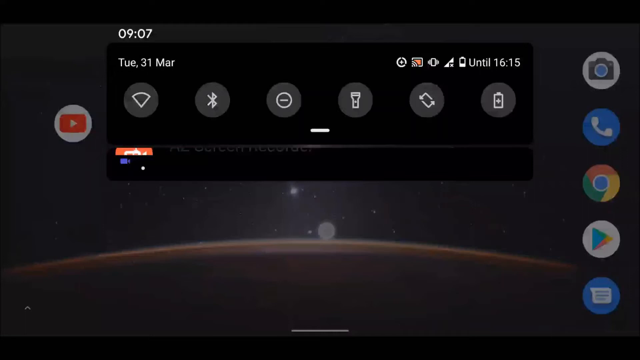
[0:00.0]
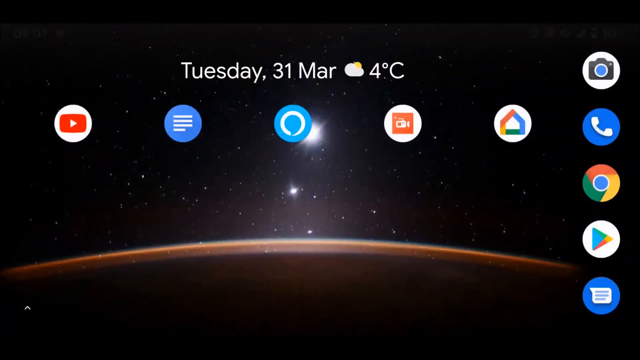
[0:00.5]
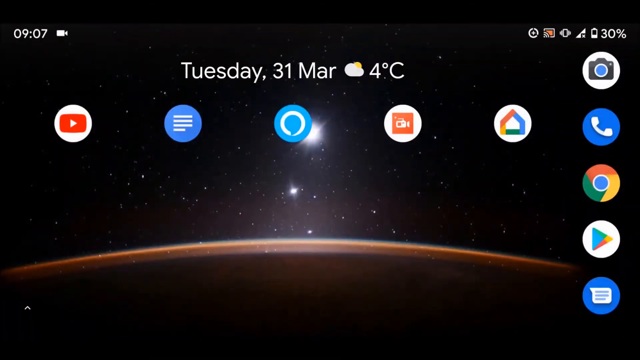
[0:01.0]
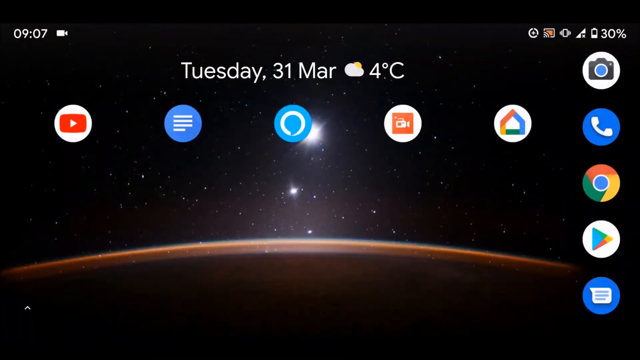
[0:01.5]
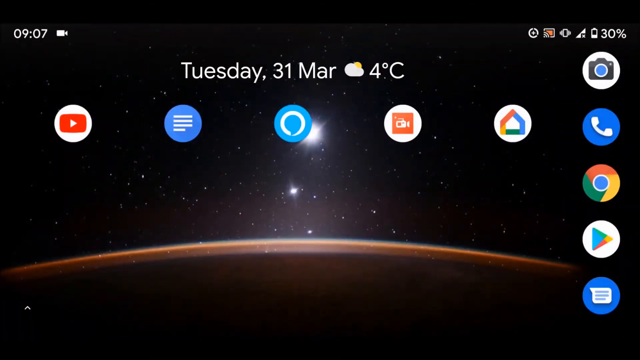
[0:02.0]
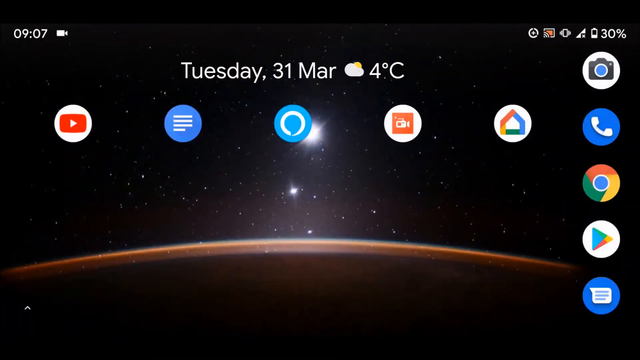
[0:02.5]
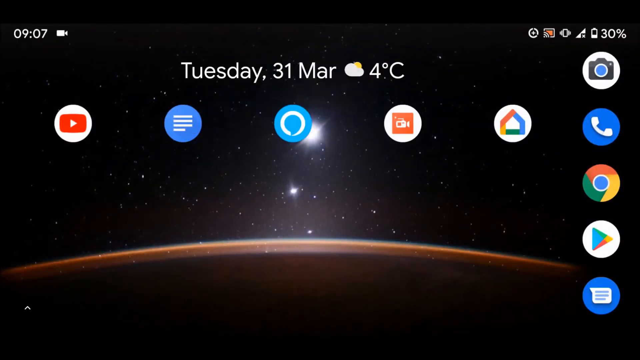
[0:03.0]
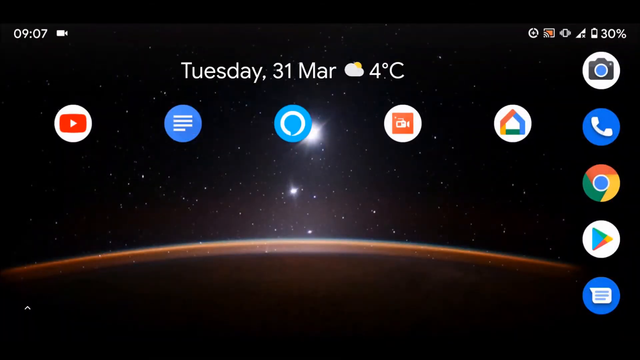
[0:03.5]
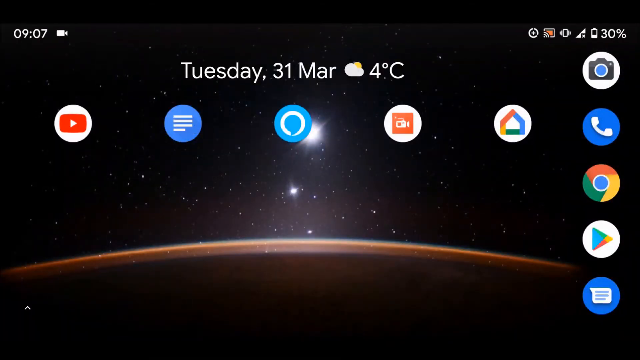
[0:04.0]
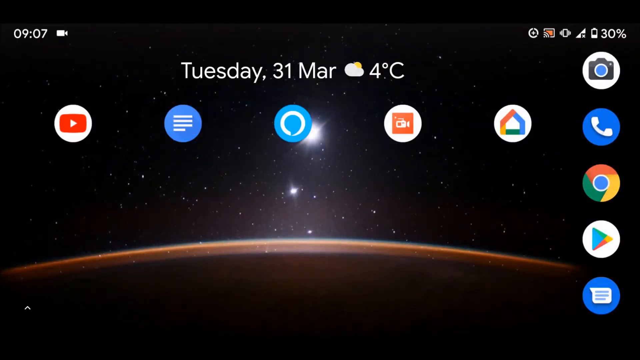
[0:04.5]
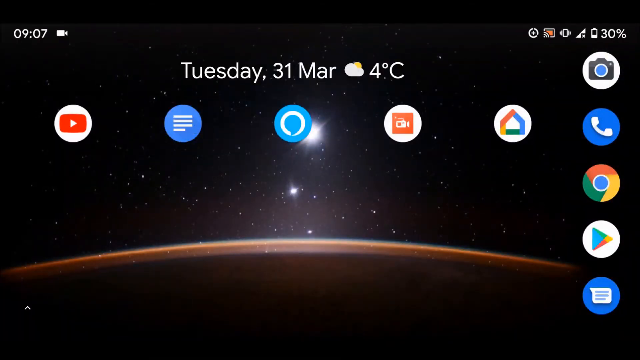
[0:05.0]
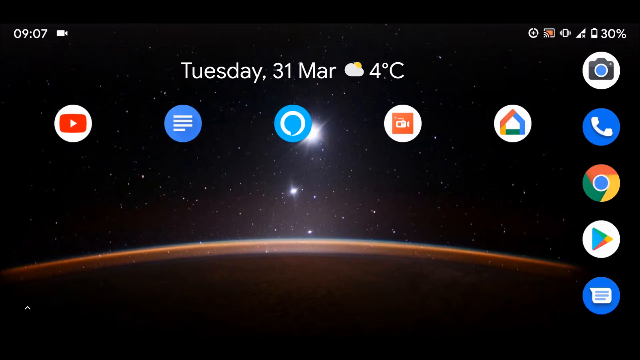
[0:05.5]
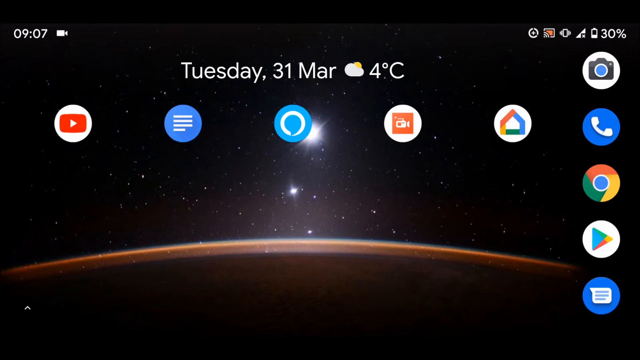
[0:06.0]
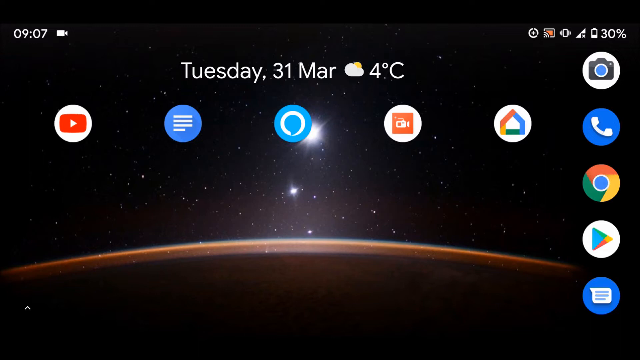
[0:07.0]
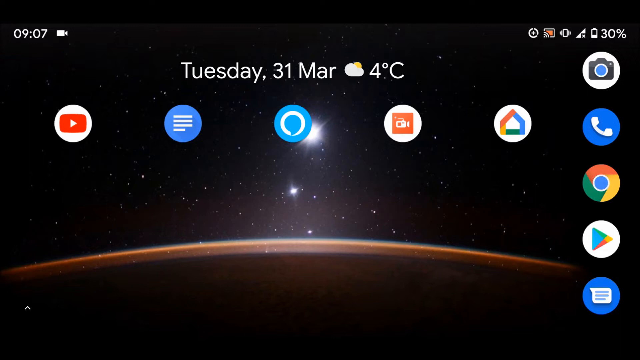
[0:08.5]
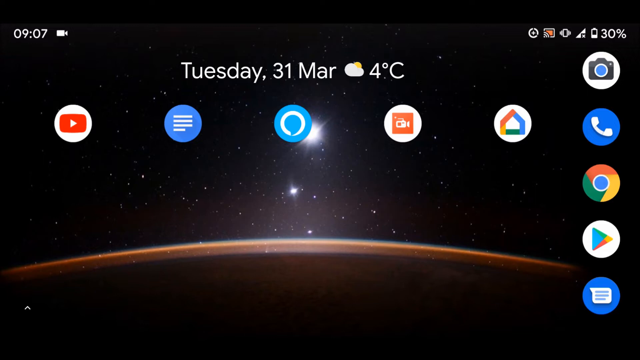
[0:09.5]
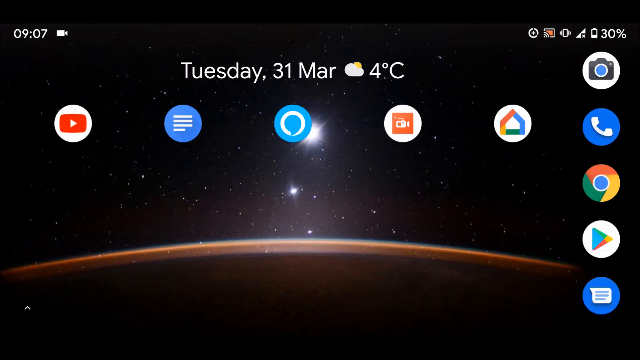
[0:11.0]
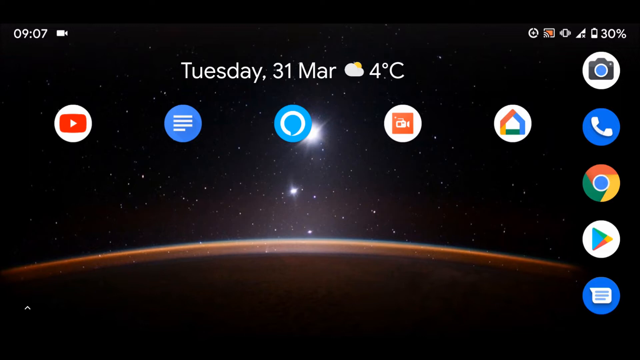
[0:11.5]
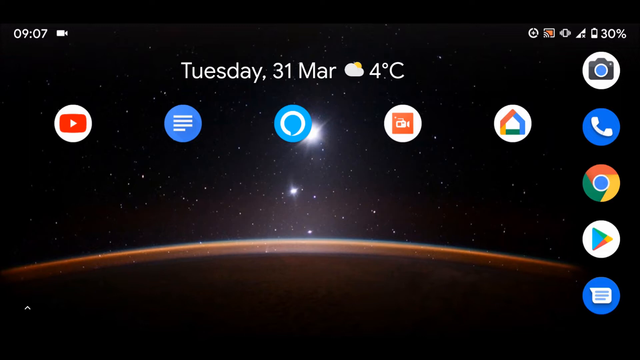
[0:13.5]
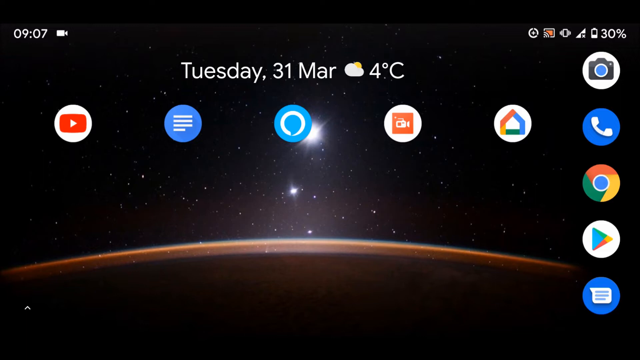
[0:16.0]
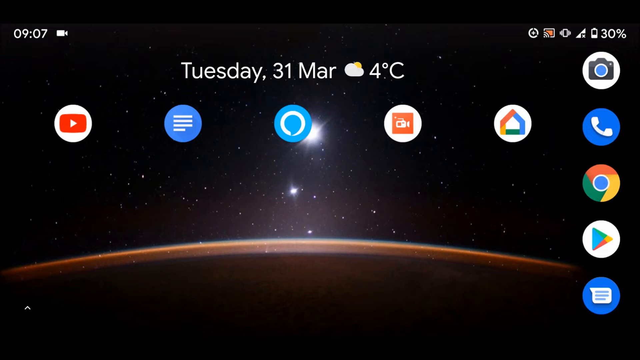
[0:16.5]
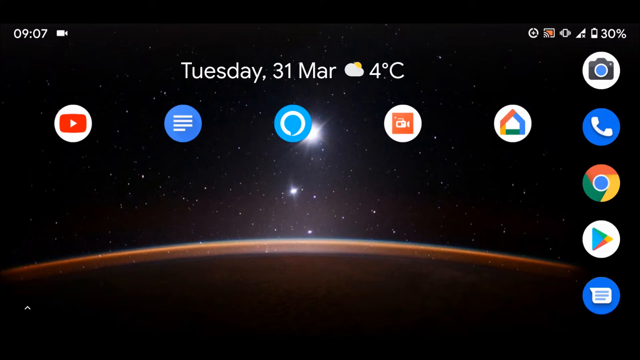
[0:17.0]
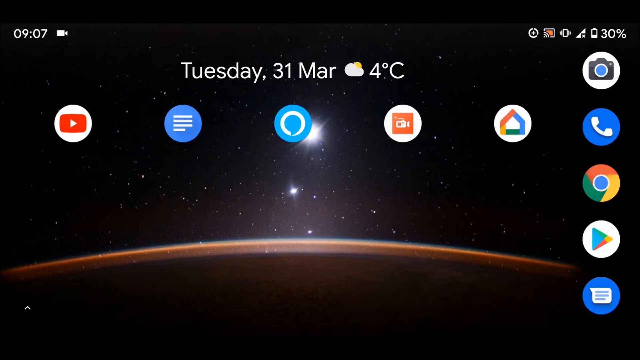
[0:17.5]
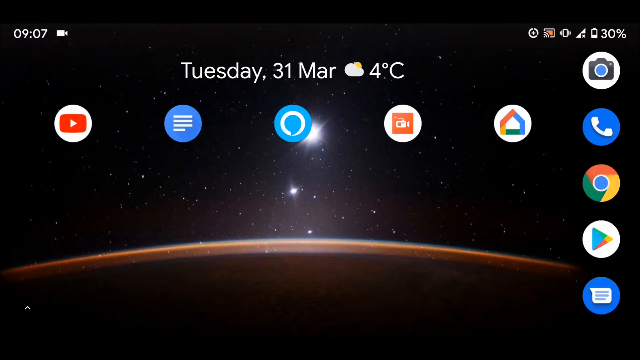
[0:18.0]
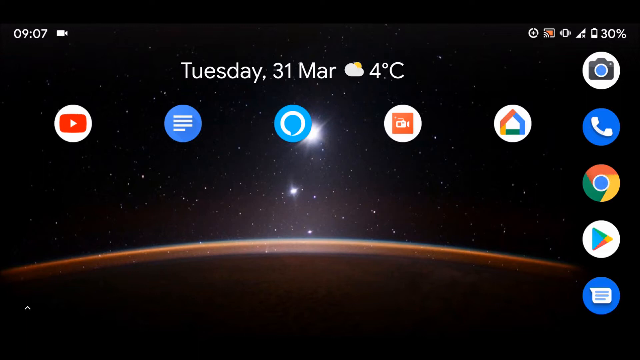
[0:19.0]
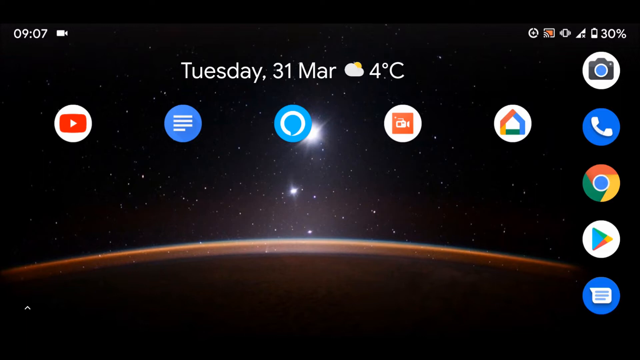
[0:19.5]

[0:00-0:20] A desktop with icons on it is shown; it could possibly be a phone screen instead. The background kind of looks like a planet in space, with stars: a really big star right in the middle, smaller stars underneath it, and the rest of the stars in the background. In the forefront, white text reads "Tuesday 31" and "MAR", with a cloud with the sun behind it and "4 degrees Celsius". In the top right there is what looks like a battery icon with "30%" on it. Icons appear underneath: one looks like a camera, another looks like a white phone receiver, and below them are the Chrome icon and another icon that kind of looks like a triangle.